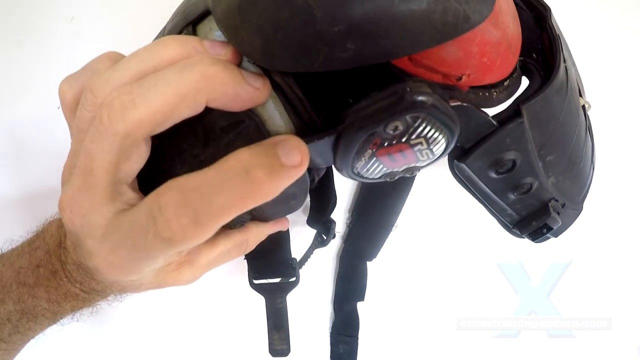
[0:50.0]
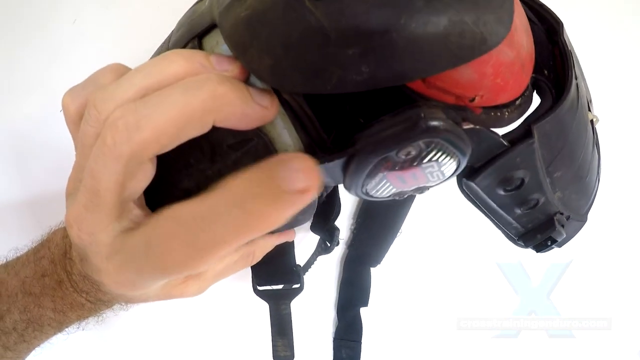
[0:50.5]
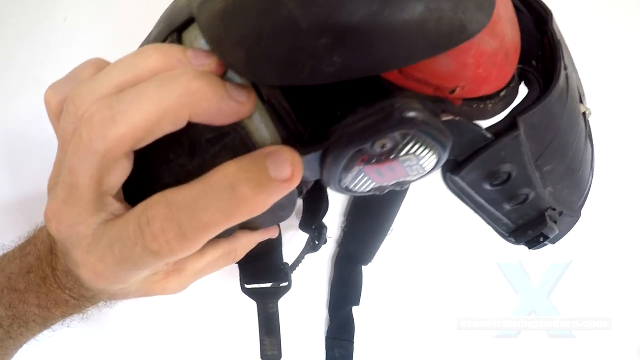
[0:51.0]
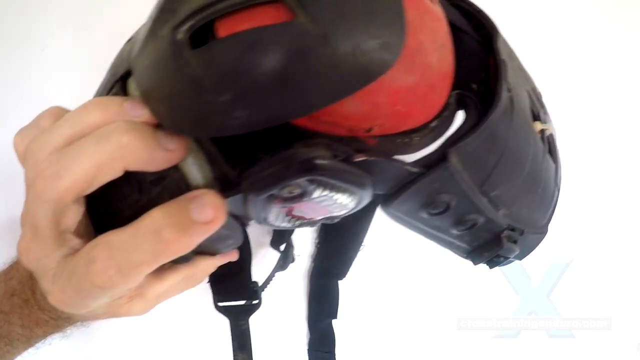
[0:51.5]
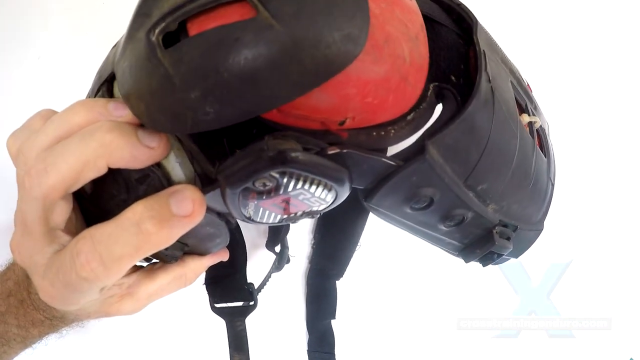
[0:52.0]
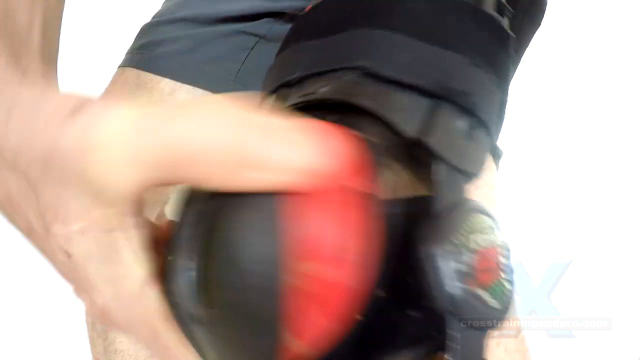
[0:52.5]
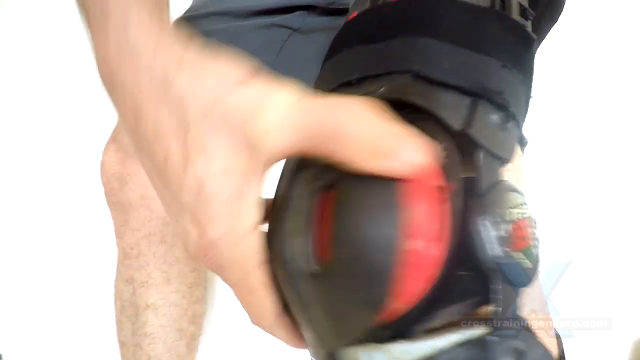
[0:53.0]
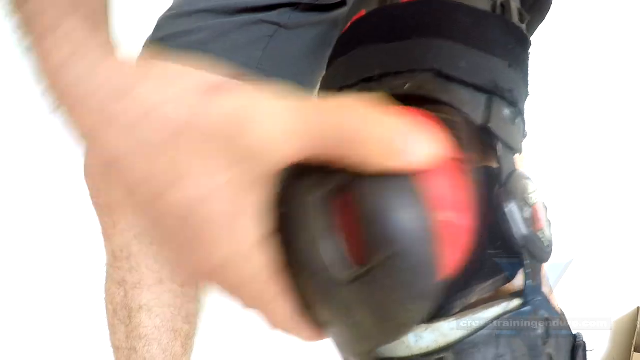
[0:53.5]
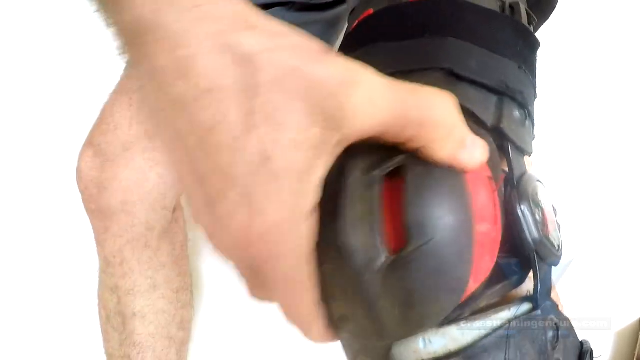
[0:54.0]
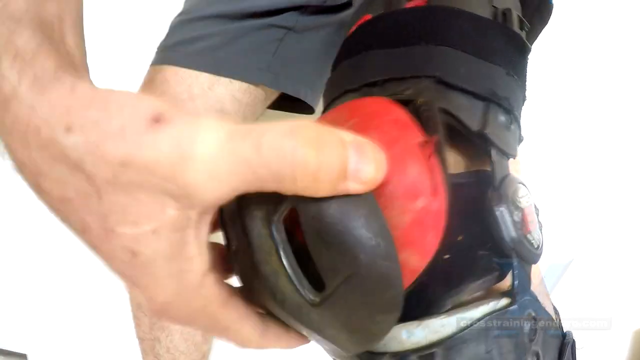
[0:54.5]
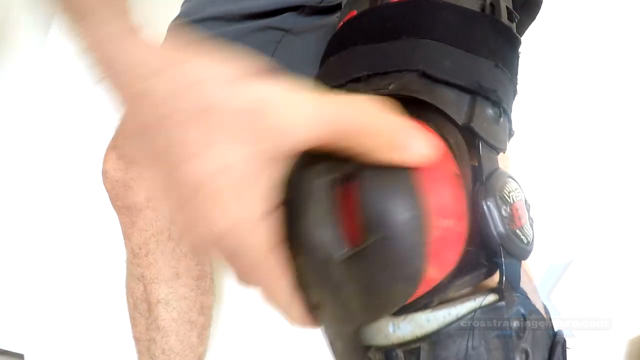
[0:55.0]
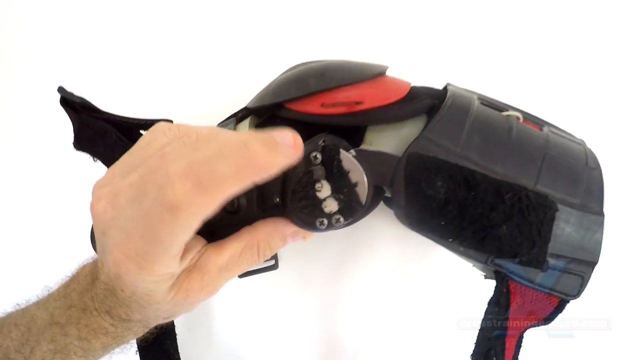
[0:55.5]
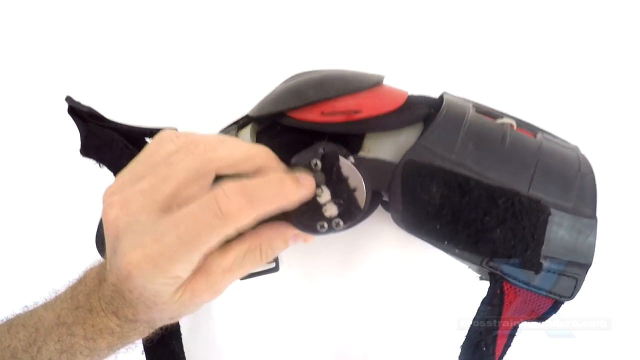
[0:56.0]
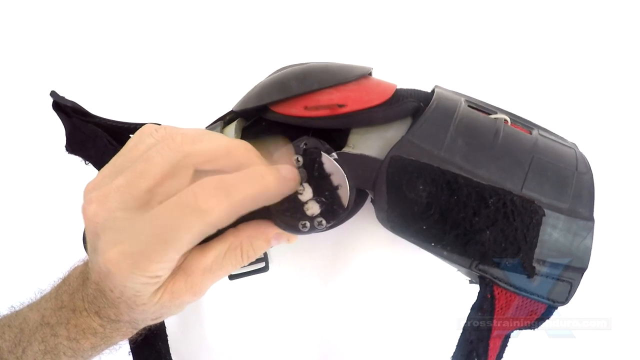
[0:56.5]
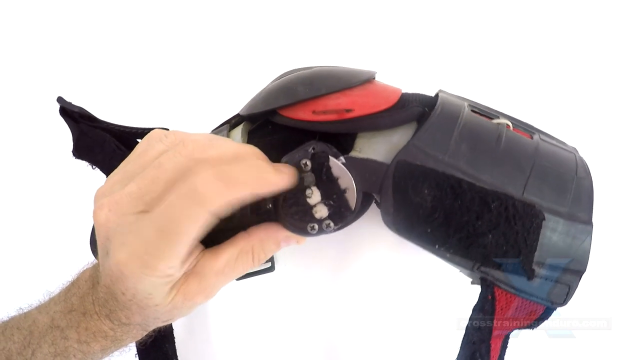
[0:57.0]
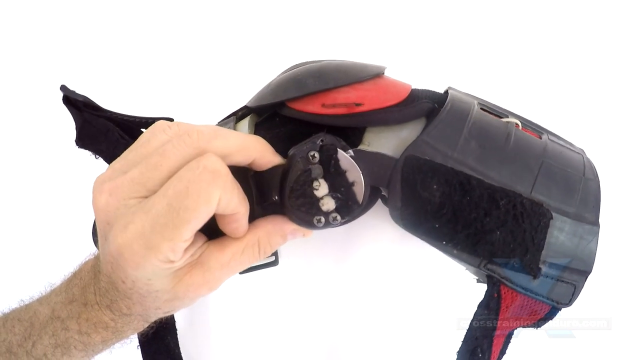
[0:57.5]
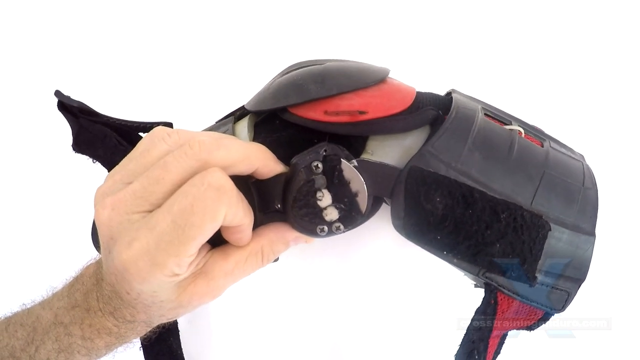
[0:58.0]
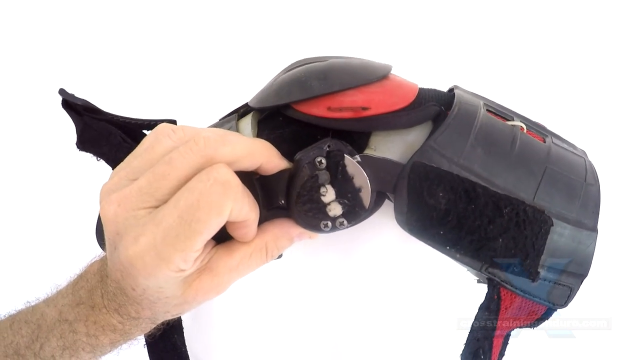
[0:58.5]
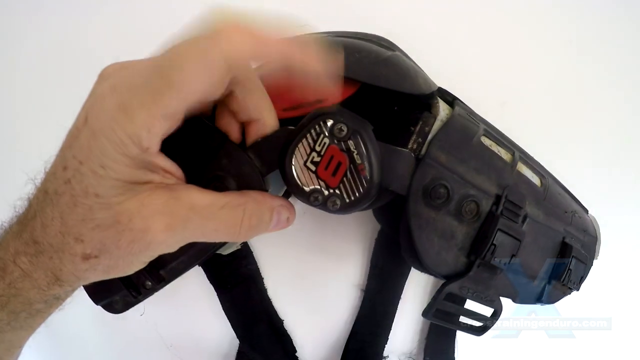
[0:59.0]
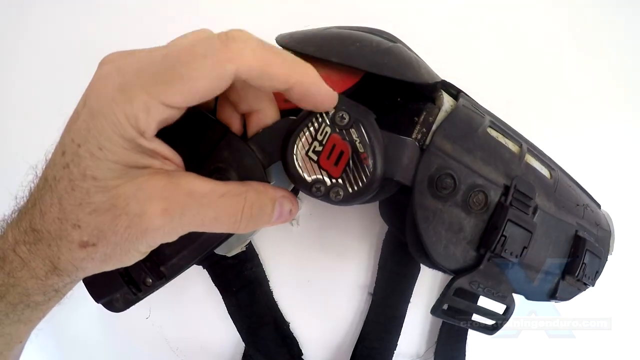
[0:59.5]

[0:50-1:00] A person with a white complexion holds the knee braces in his left hand and taps them. The knee braces are black with red and white in them. Another person with a white complexion wears the knee braces on his left leg and opens and closes a red knee brace covered in black. He taps on the side of the knee brace, showing something that is malfunctioning; the knee brace may be broken and in need of repair.